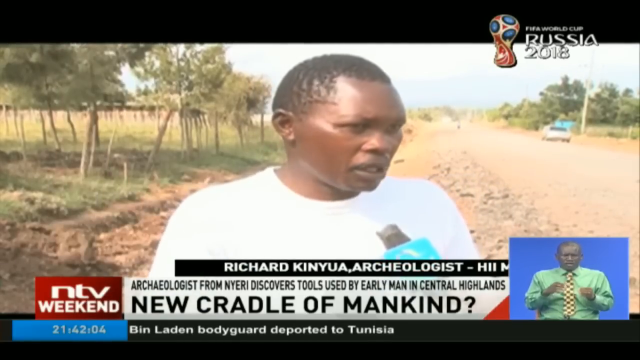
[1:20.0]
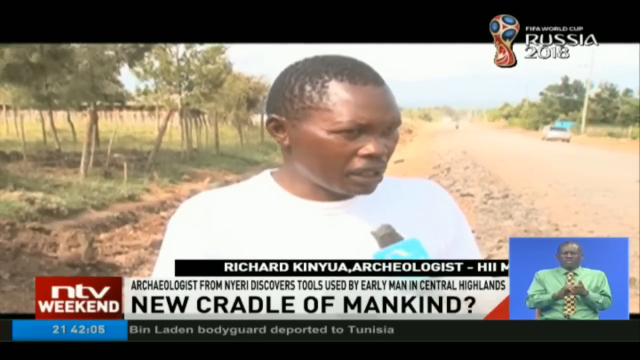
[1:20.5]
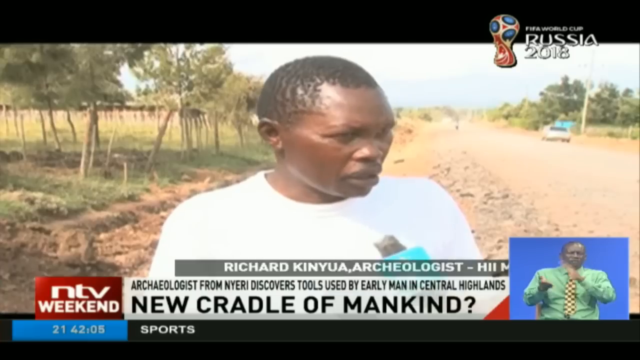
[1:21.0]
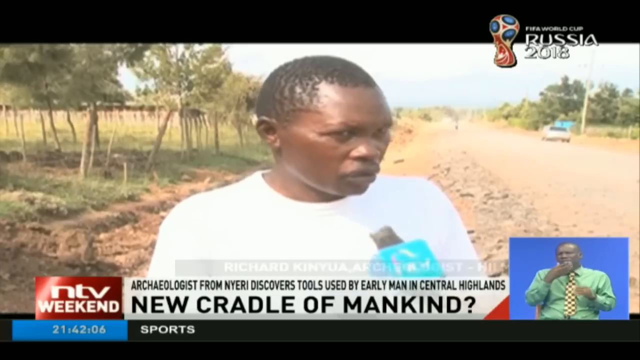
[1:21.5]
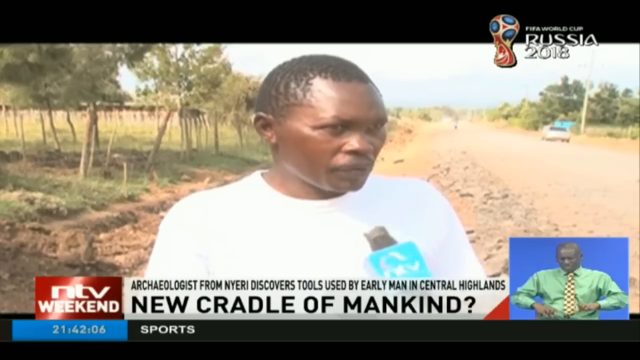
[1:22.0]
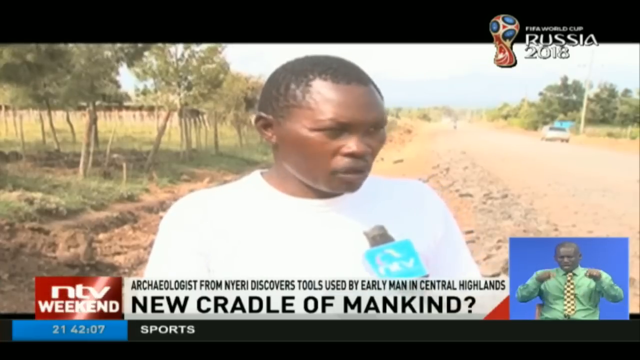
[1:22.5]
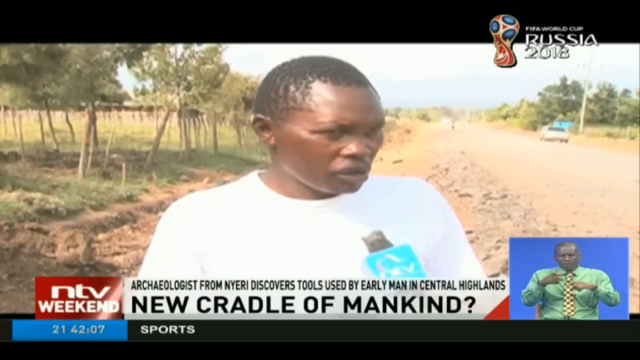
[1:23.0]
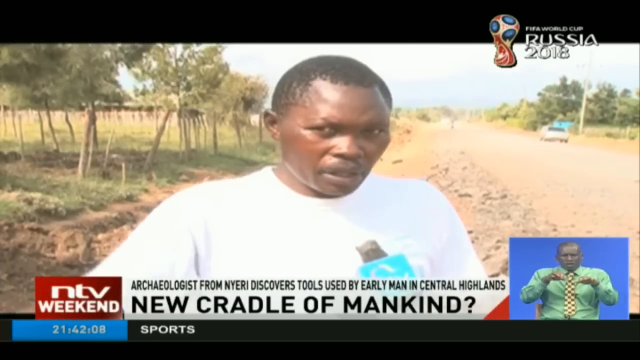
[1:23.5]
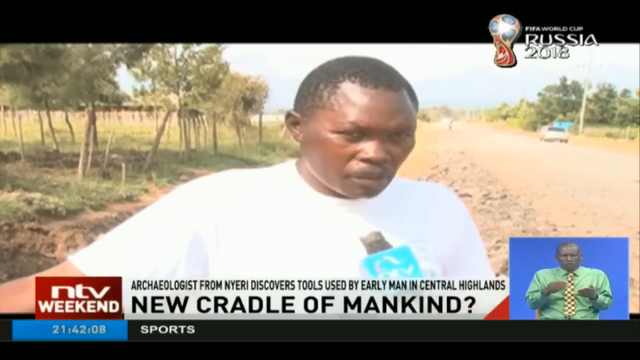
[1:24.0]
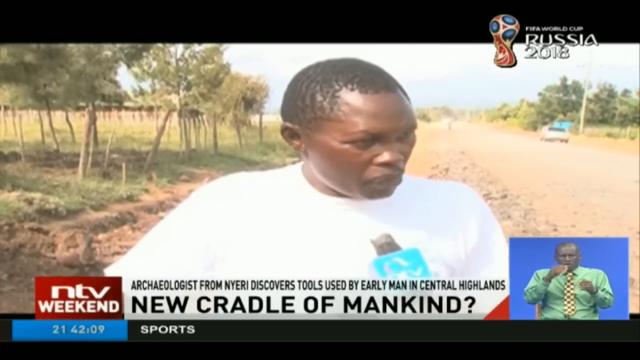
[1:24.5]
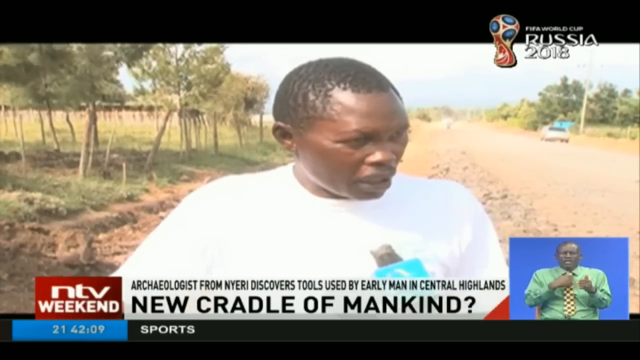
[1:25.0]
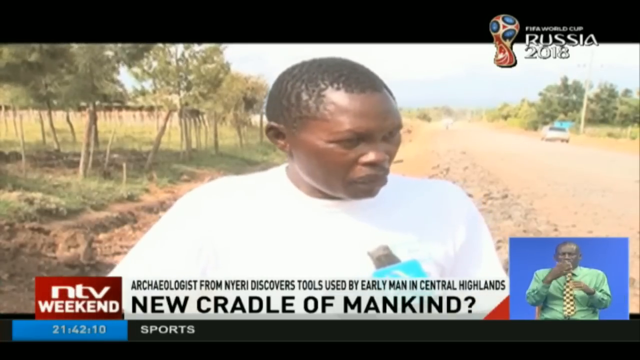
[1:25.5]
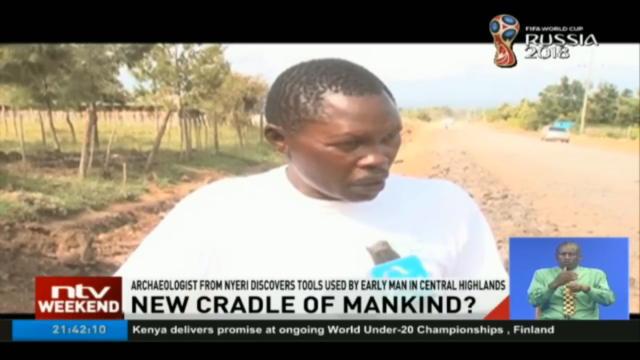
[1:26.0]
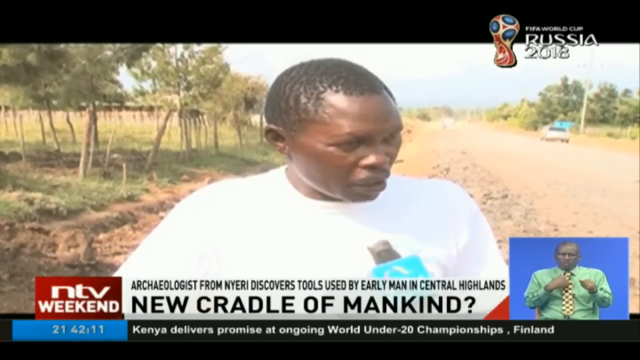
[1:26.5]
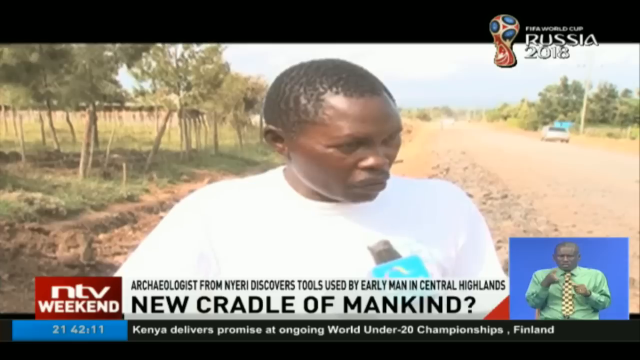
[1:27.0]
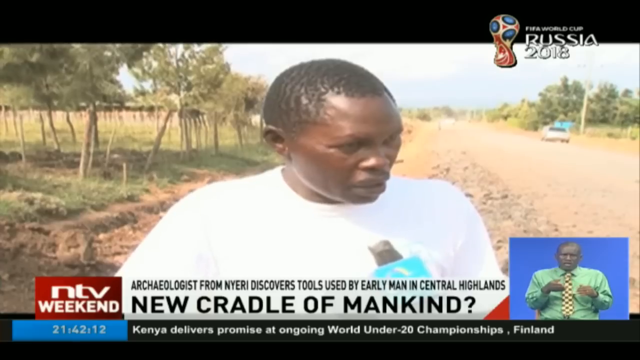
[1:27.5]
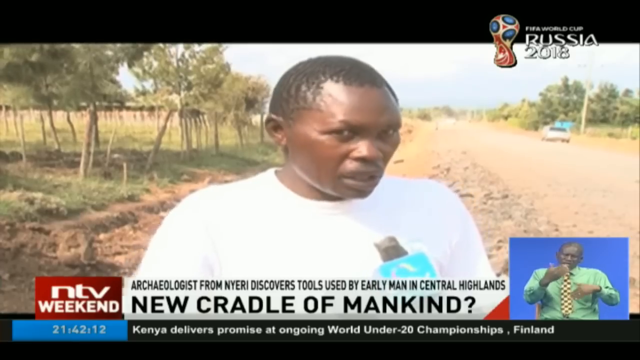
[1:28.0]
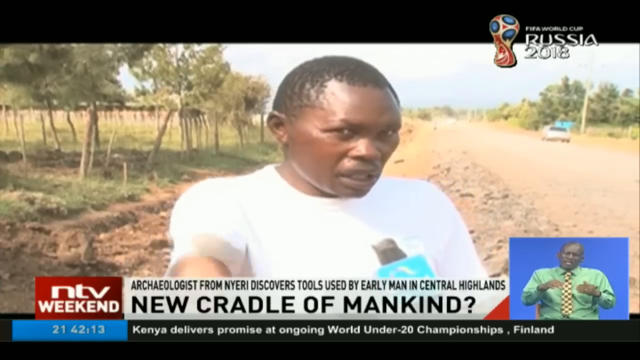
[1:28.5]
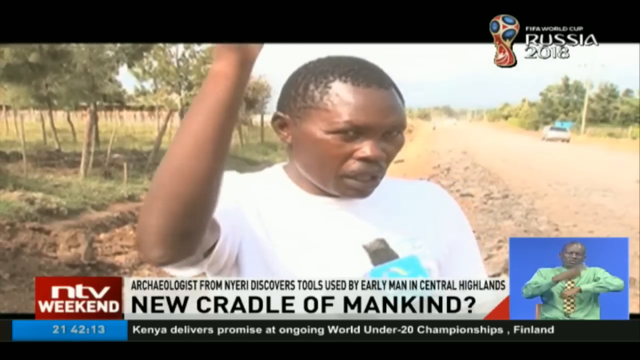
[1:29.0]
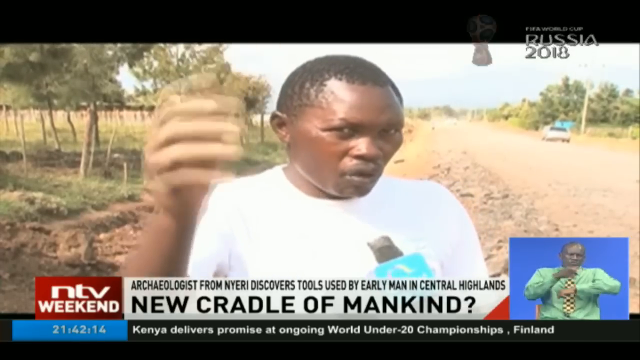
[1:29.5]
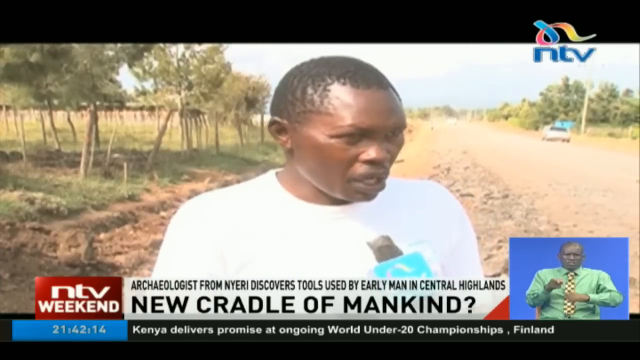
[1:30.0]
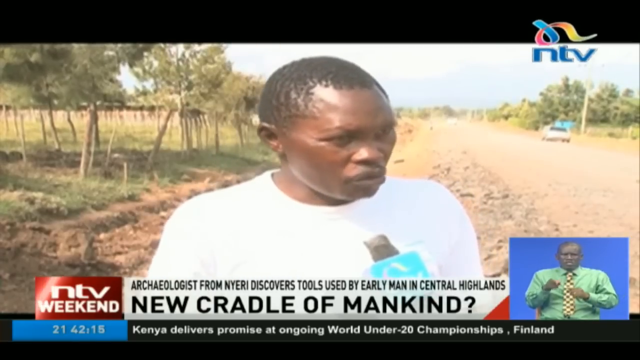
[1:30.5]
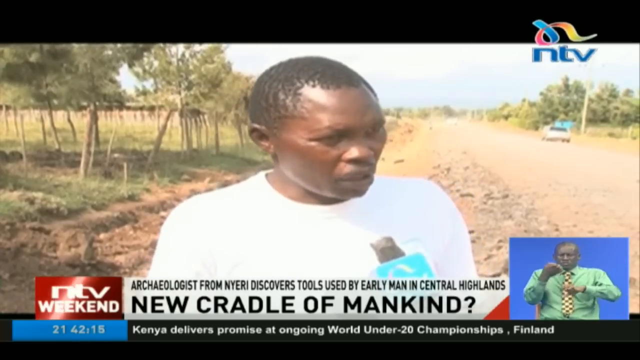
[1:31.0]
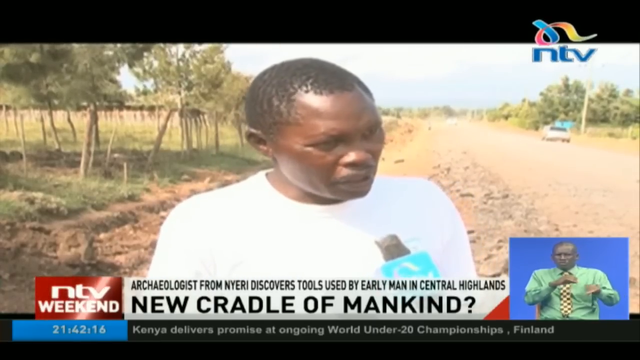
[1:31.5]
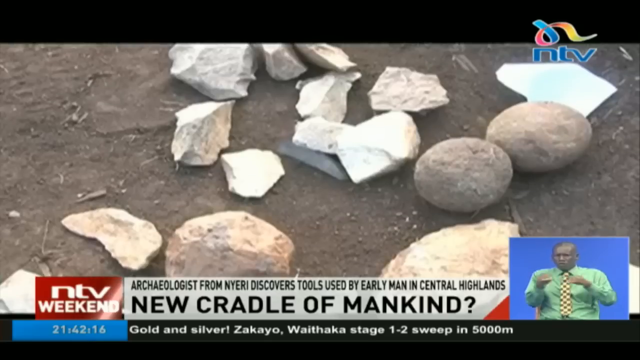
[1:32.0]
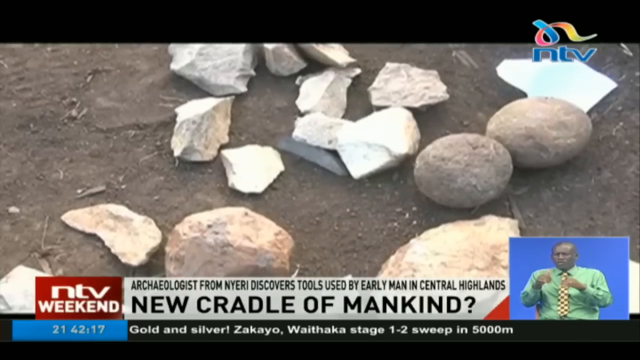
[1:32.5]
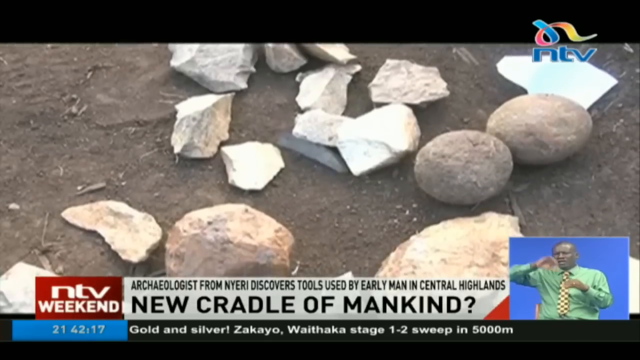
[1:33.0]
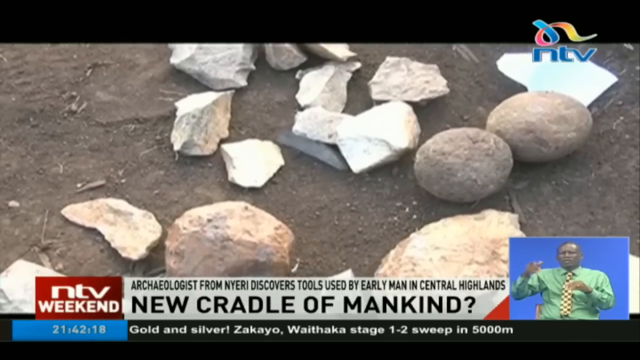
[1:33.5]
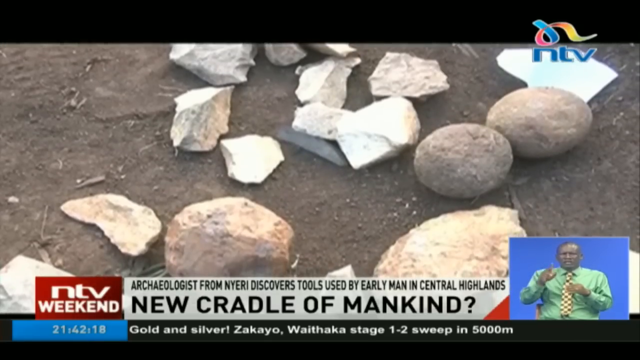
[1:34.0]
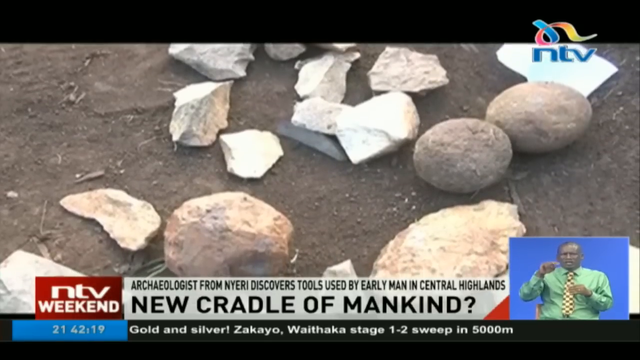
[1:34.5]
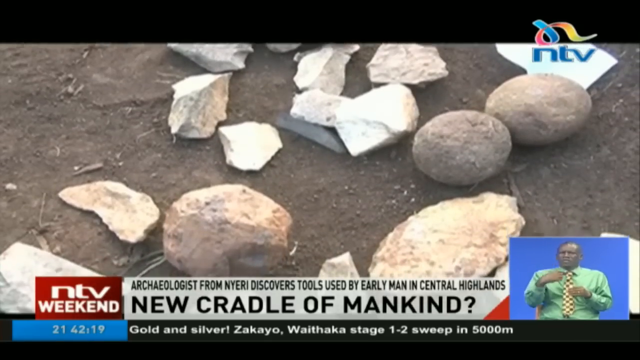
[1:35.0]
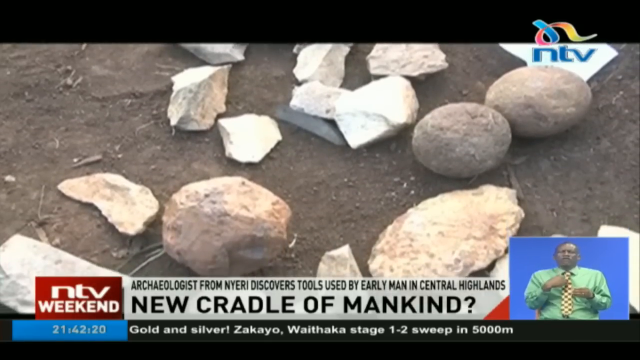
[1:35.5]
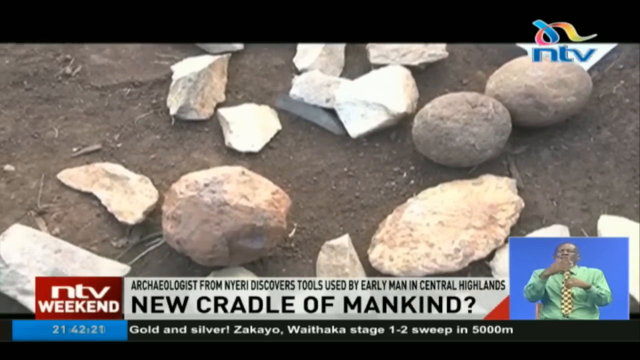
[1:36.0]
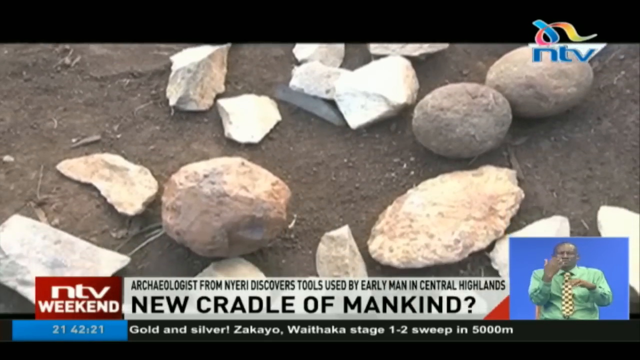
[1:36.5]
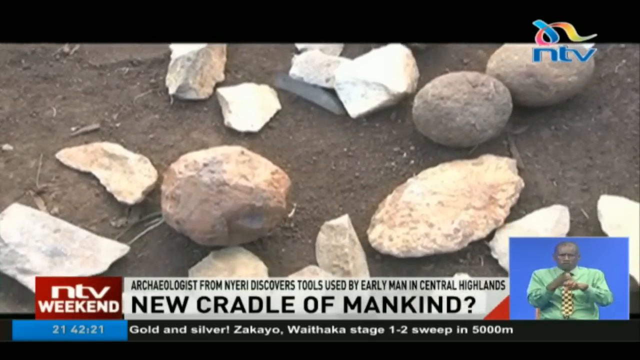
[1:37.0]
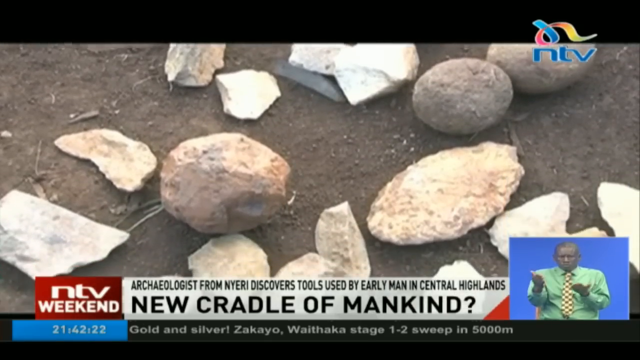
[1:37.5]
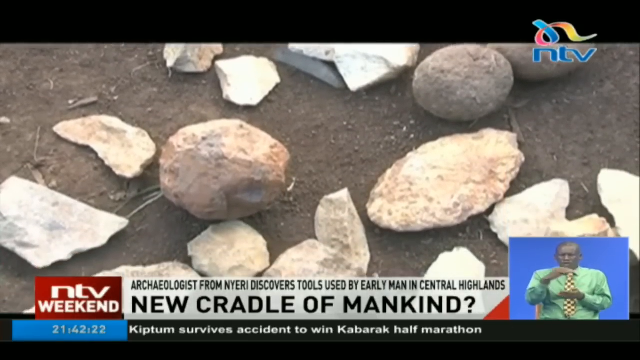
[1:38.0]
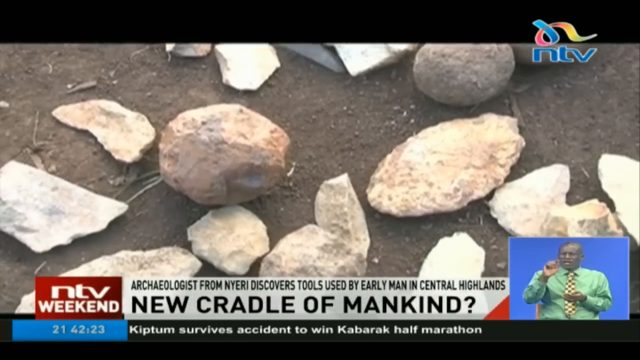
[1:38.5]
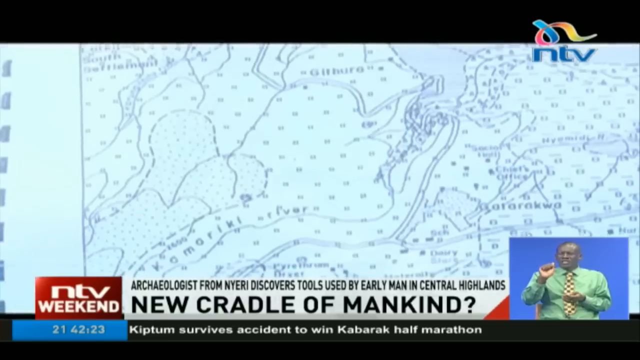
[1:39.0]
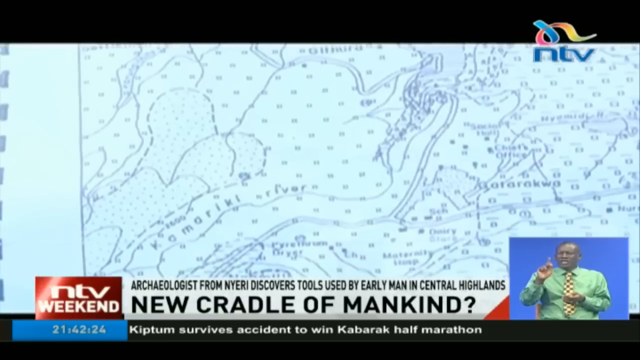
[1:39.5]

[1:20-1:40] The video is a news story about new cradles of mankind discovered by archaeologists, apparently from Nairi. The location looks like Africa, and the Central Highlands are referred to. Another discovery is shown, which looks like tools, possibly from early man.